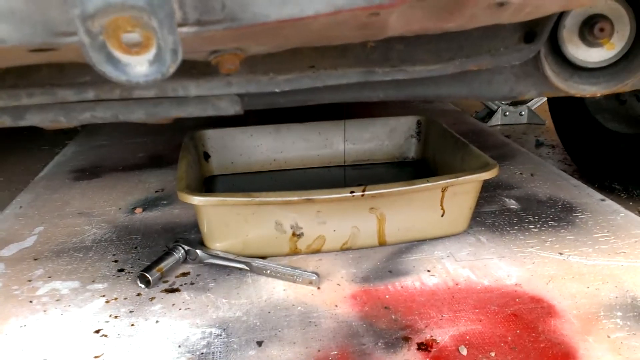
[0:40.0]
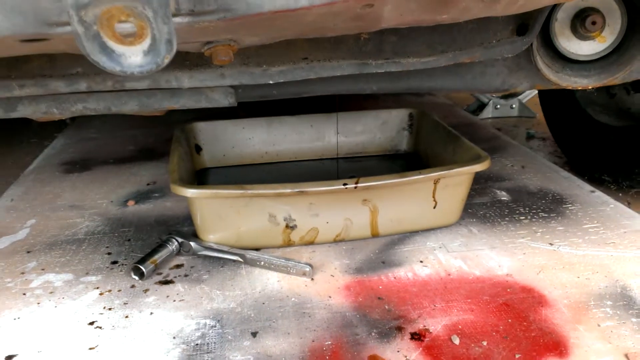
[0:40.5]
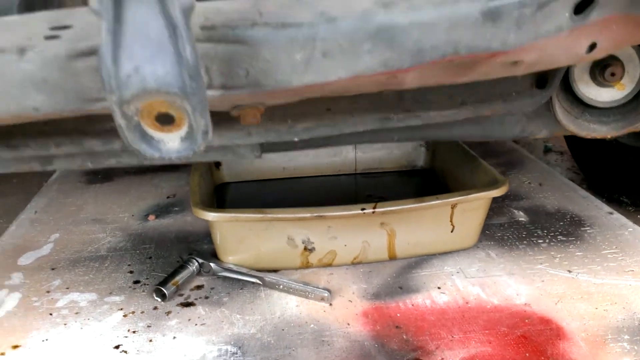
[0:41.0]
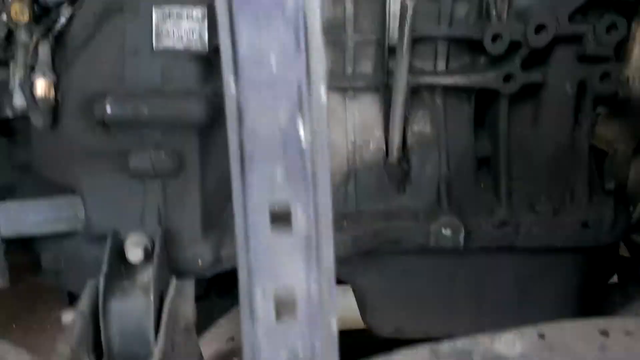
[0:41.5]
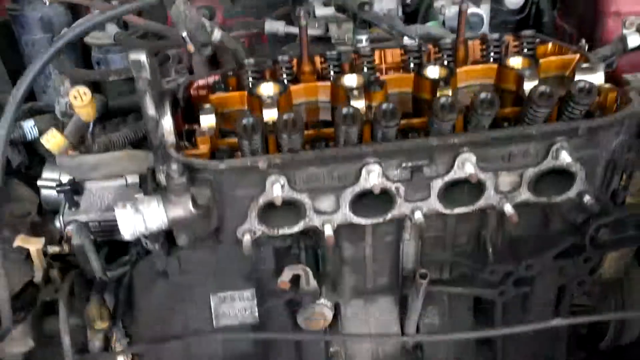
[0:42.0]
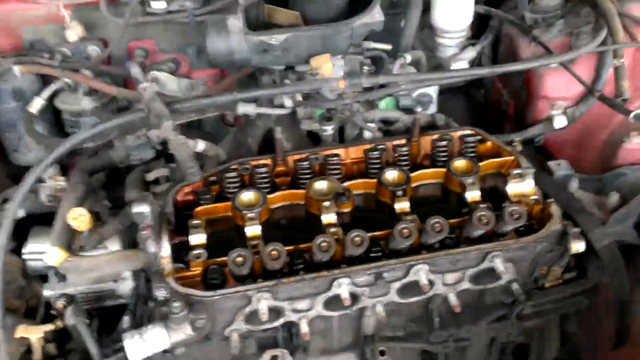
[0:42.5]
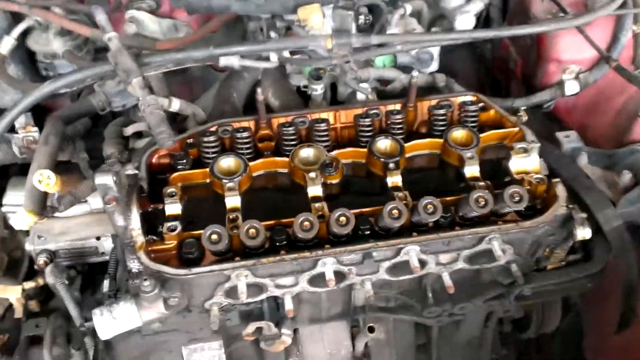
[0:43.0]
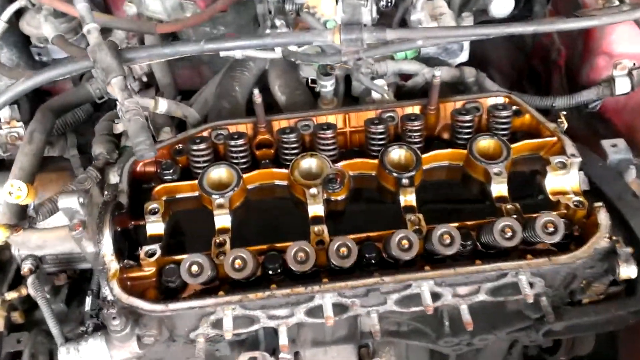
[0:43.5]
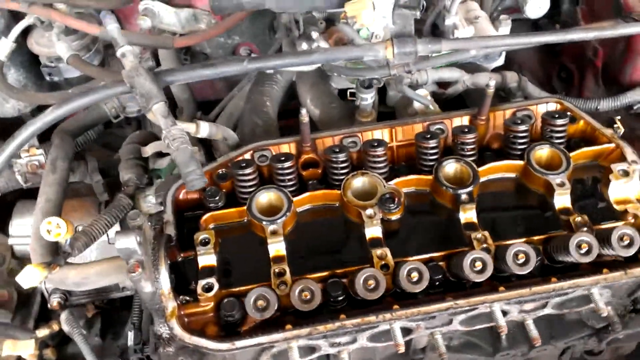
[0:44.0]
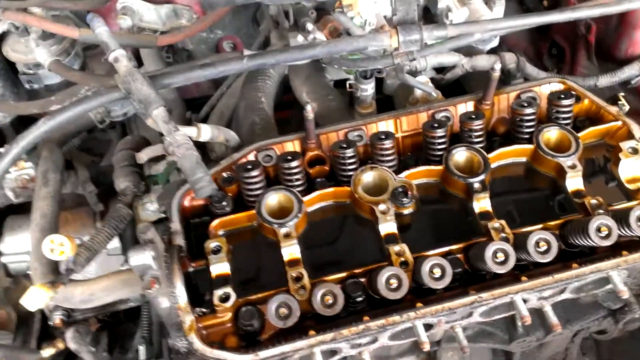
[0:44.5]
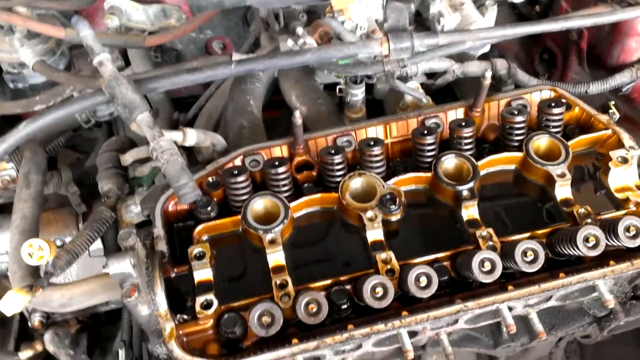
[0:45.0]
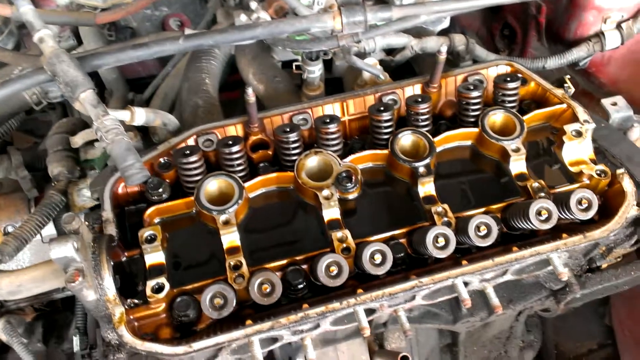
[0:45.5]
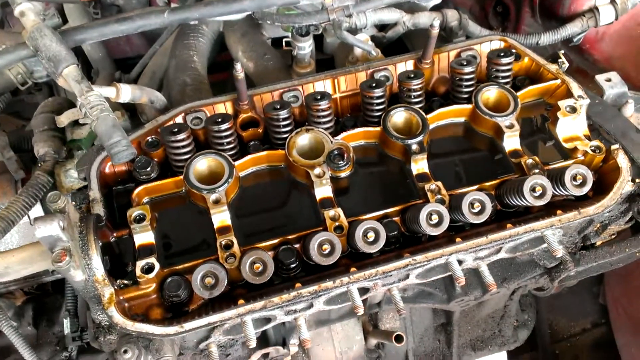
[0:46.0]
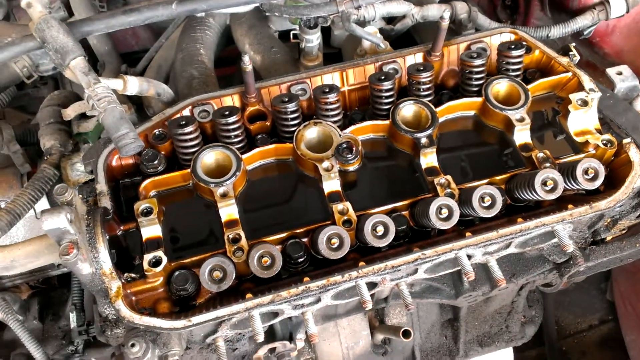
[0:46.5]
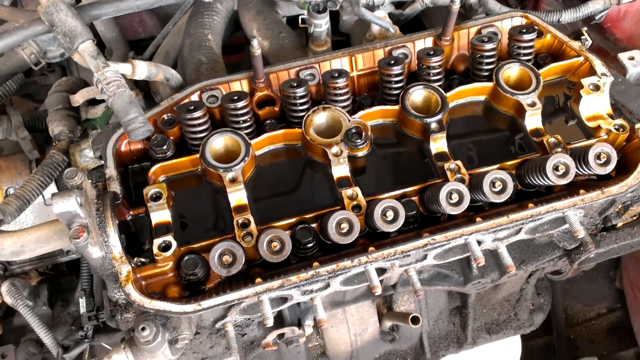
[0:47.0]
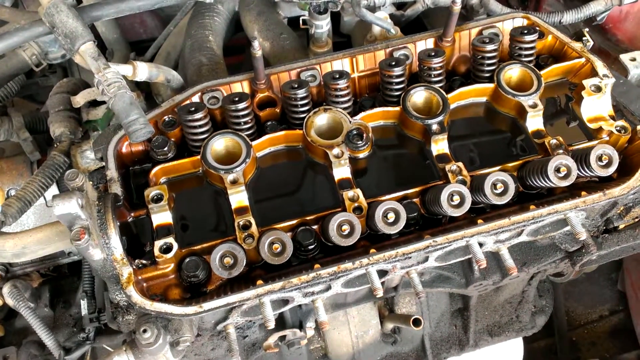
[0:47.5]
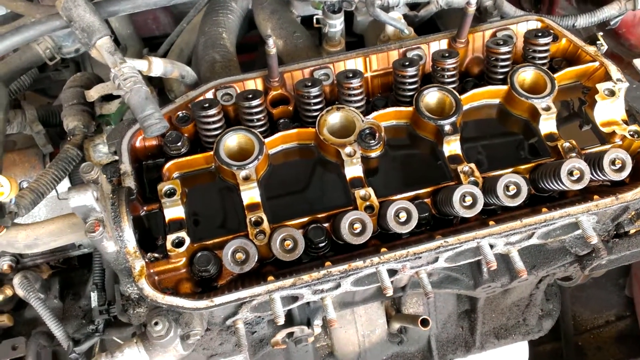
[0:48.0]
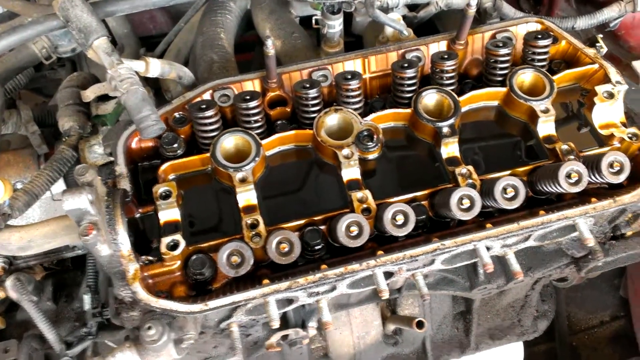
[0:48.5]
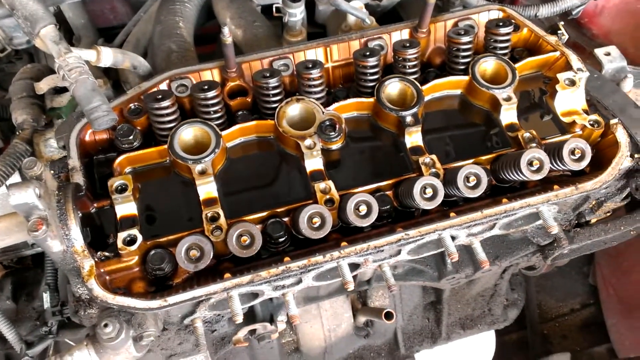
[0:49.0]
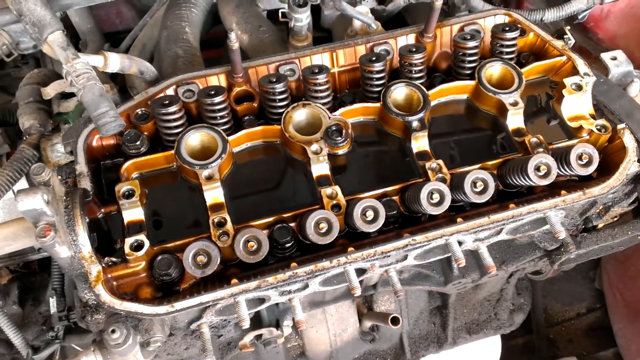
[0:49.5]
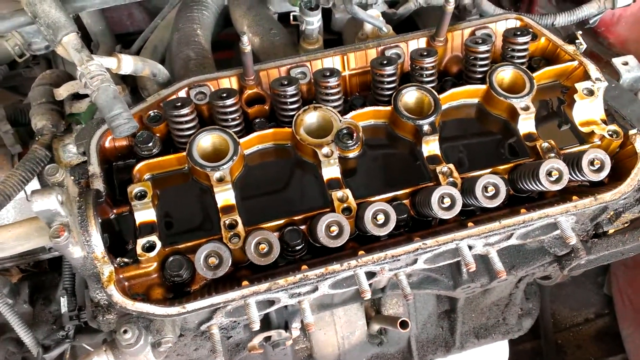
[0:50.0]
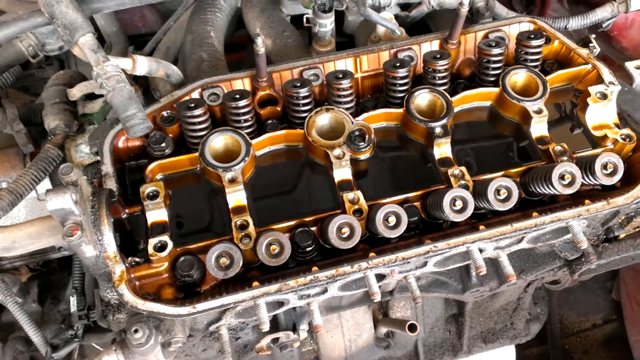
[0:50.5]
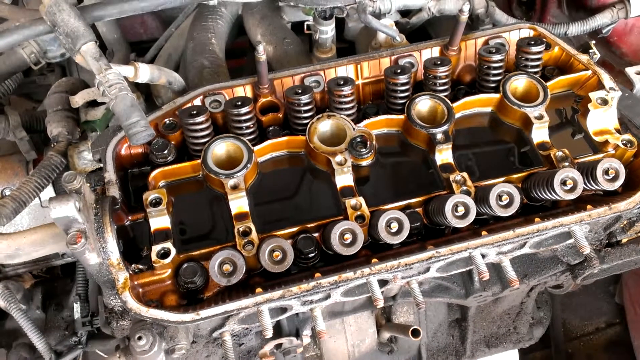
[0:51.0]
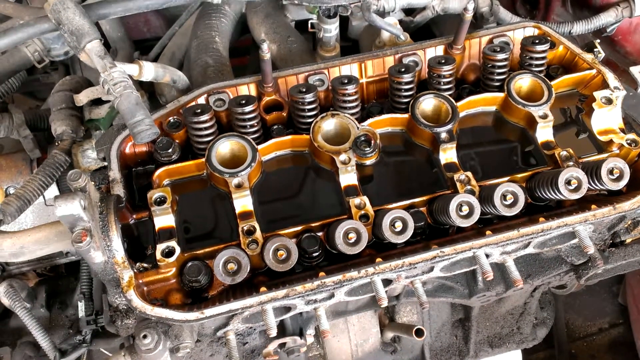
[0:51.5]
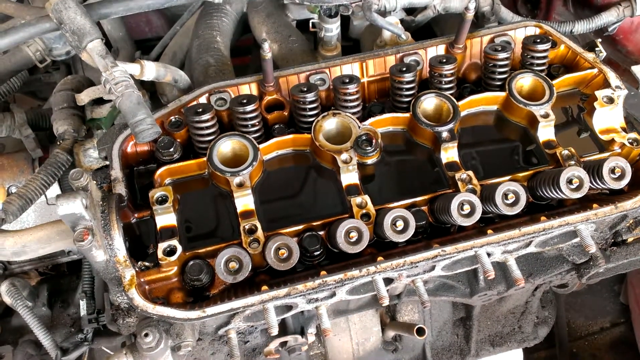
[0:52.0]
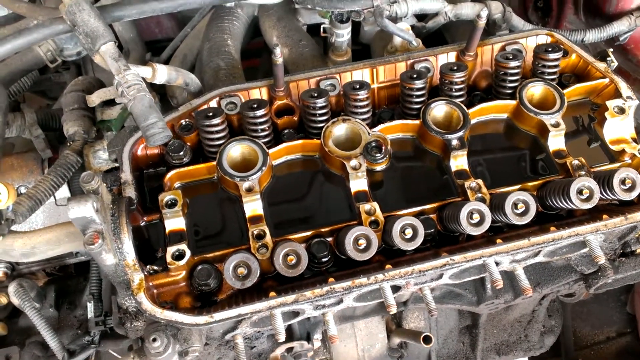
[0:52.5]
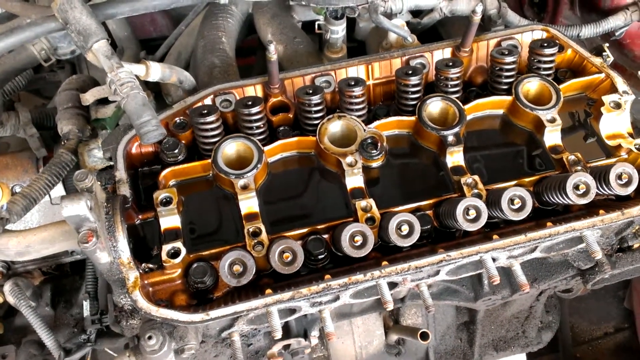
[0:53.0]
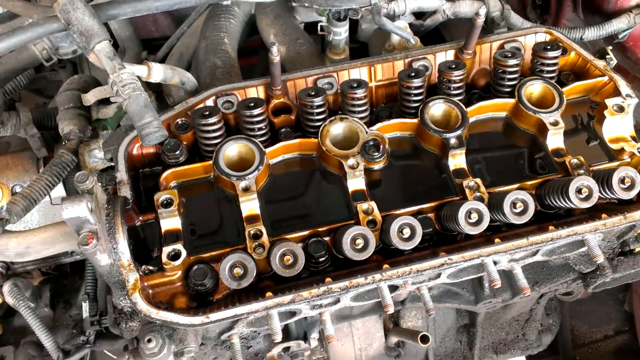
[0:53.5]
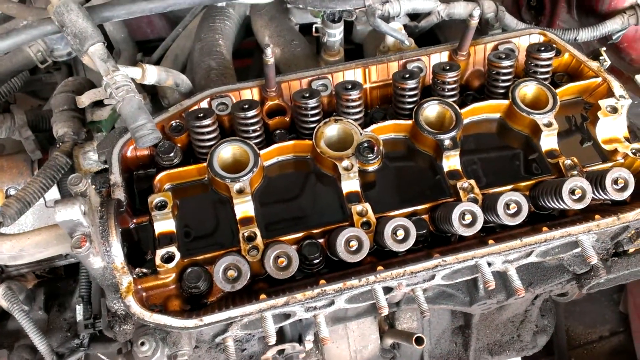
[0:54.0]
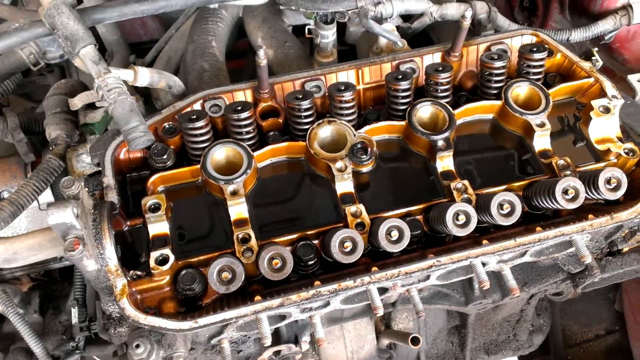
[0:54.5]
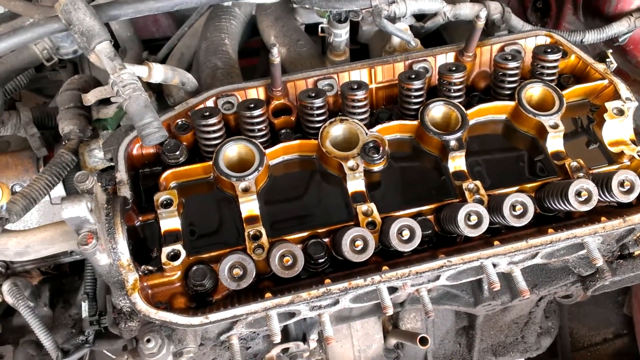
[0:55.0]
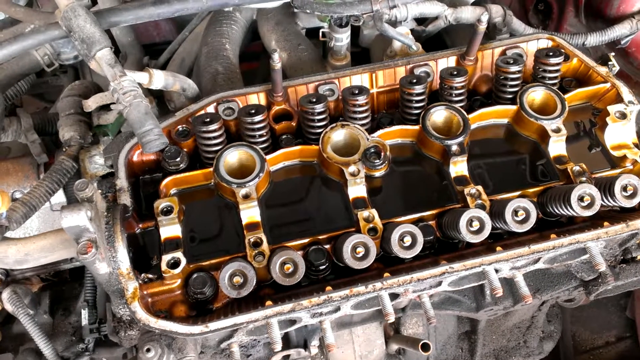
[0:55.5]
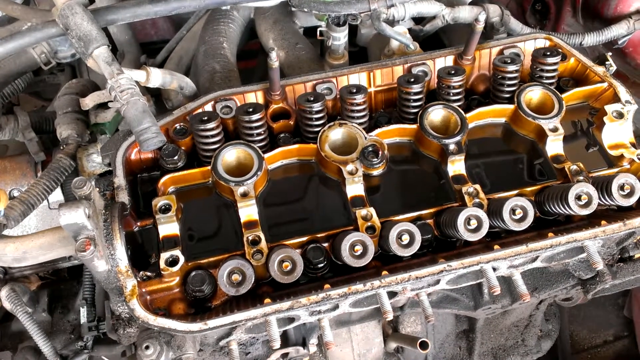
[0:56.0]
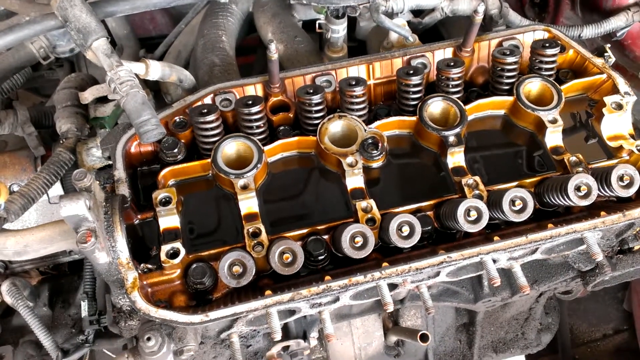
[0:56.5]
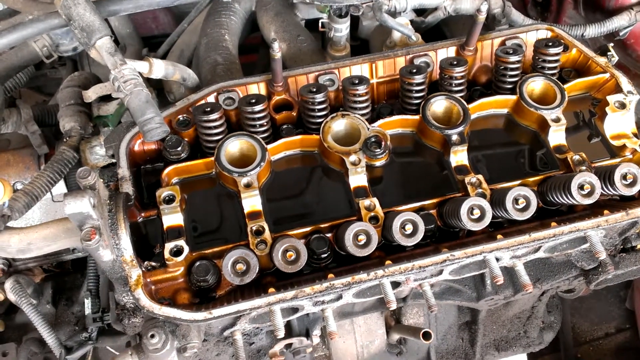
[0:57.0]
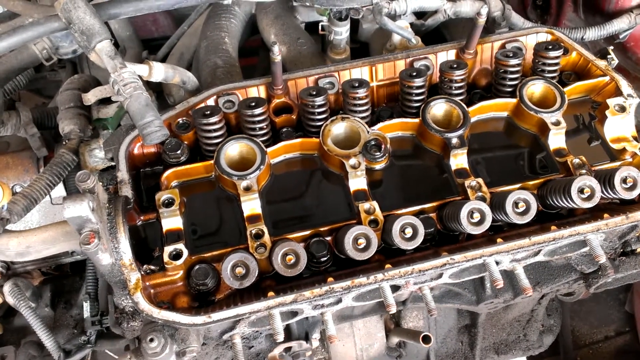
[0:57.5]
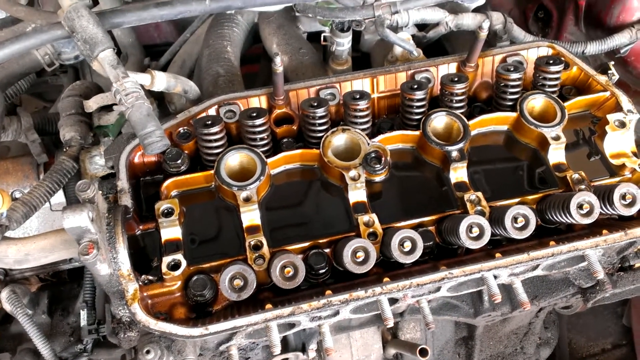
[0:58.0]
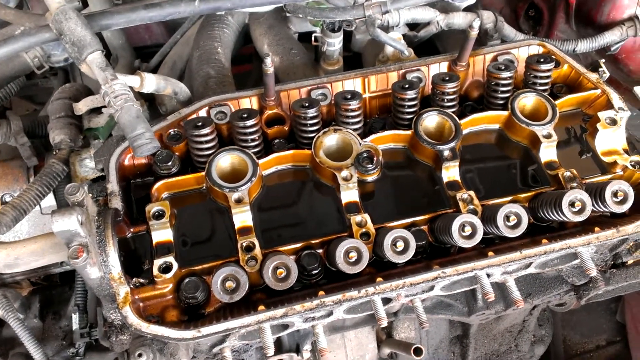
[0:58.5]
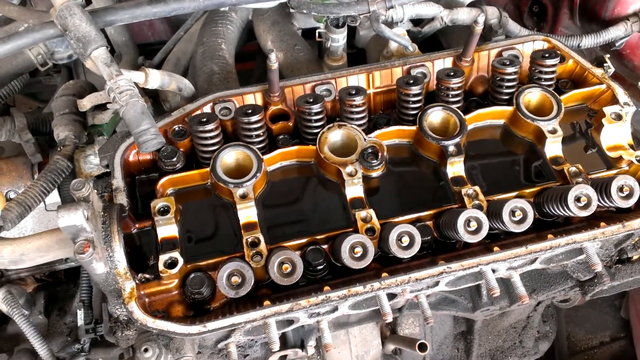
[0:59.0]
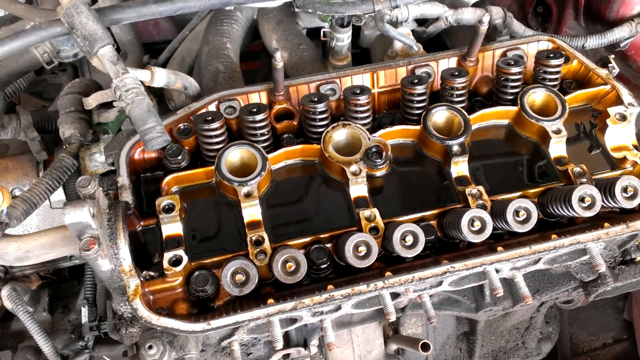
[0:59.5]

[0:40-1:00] A rectangular pan is on a metal platform, with a metal gray tool, a wrench, to the outside of it. The platform has several stains on it, some black and some red. The camera then pans up to the machinery inside the vehicle, showing the item with four big bolts in the middle, eight bolts underneath, and eight copper bolts above the middle bolts. At the top of this piece of machinery, several metal wires and hoses connect to it. Red shows on the vehicle on the right side of the screen. As the camera pans up from the pan underneath the vehicle to the inside of the vehicle, the metal frame of the car is visible.